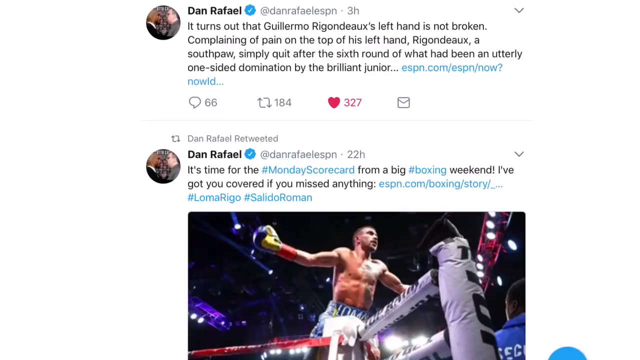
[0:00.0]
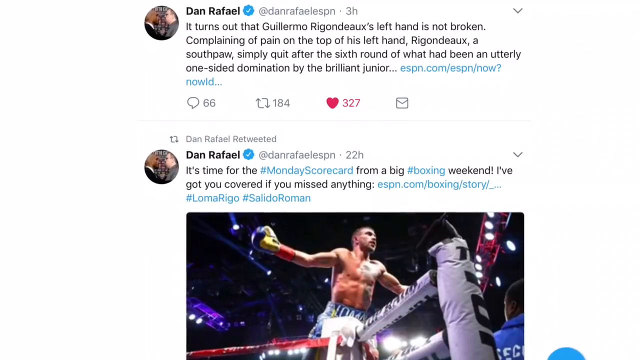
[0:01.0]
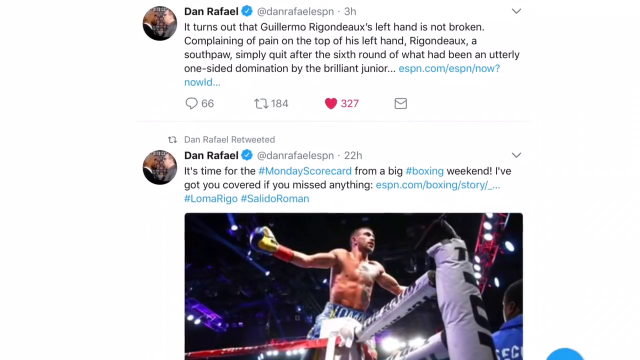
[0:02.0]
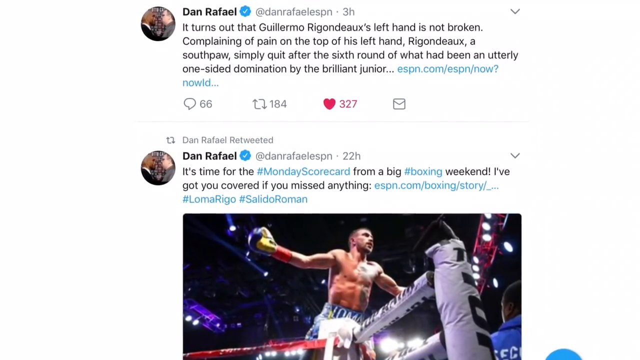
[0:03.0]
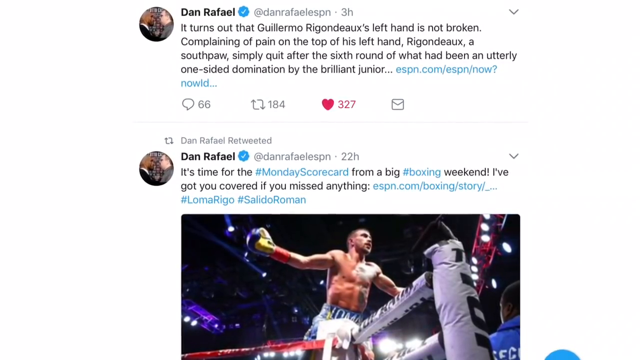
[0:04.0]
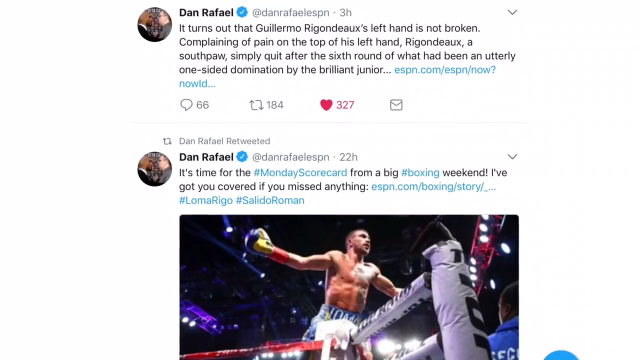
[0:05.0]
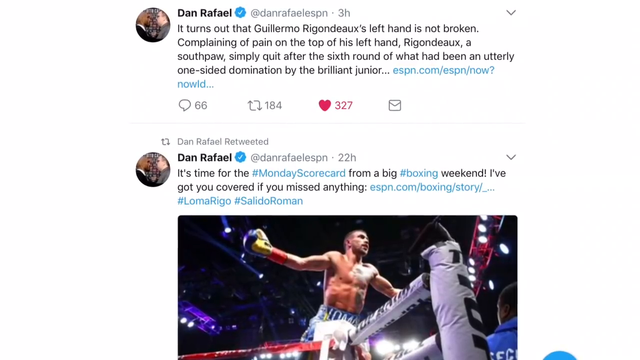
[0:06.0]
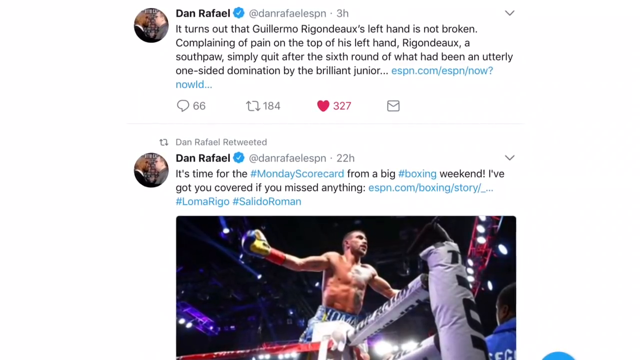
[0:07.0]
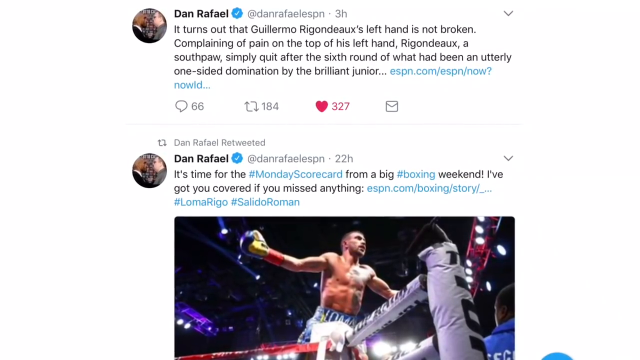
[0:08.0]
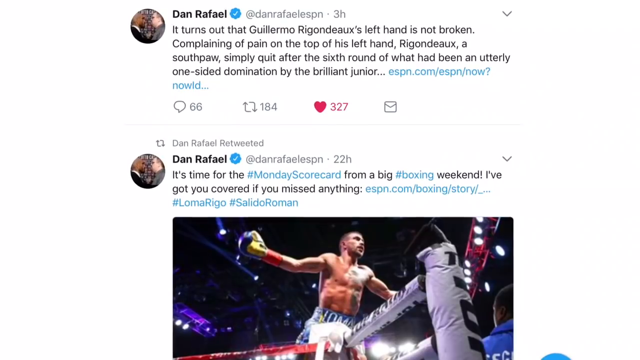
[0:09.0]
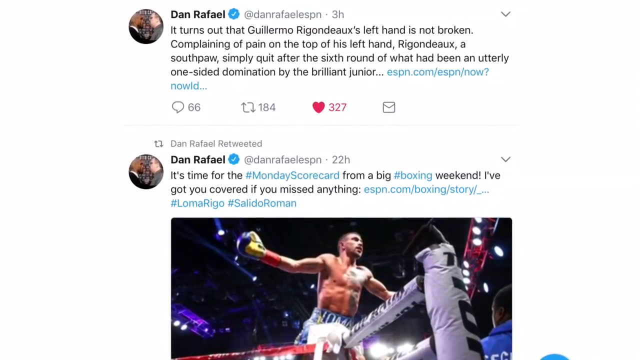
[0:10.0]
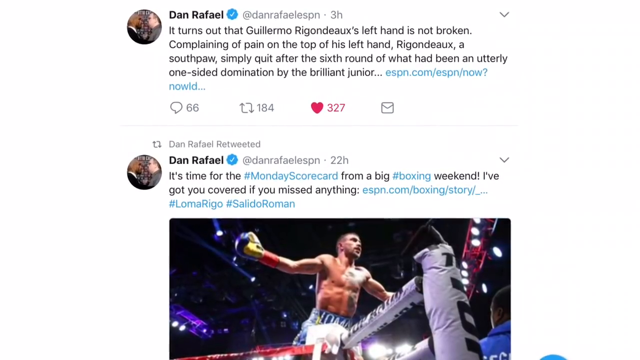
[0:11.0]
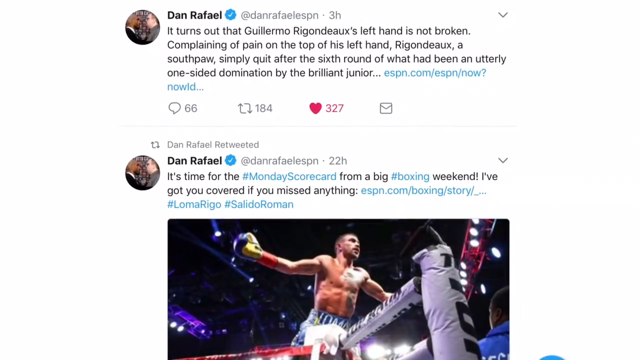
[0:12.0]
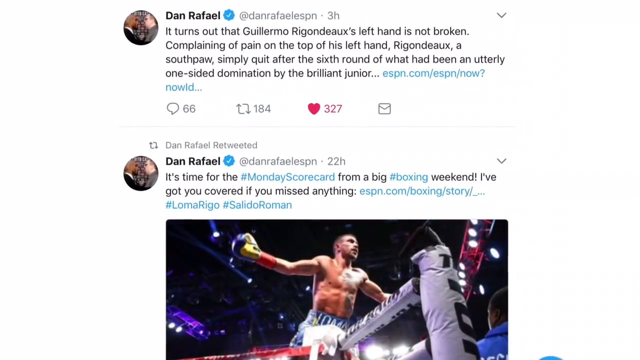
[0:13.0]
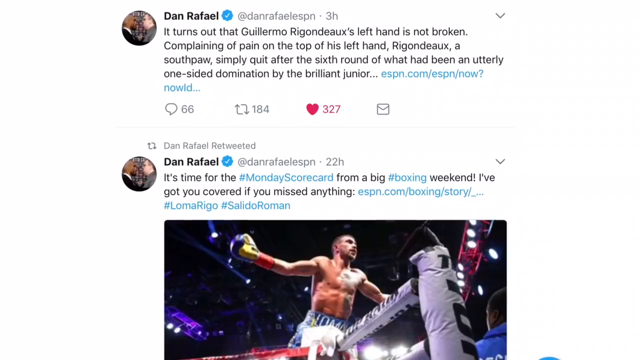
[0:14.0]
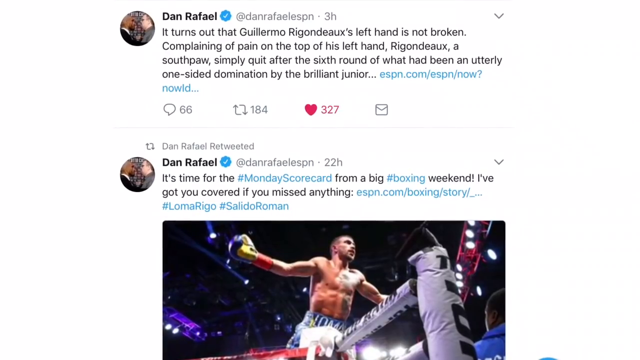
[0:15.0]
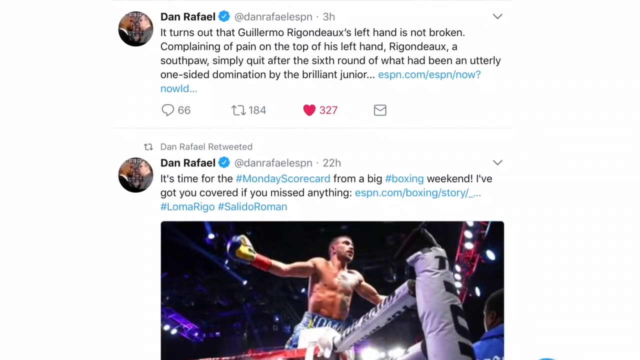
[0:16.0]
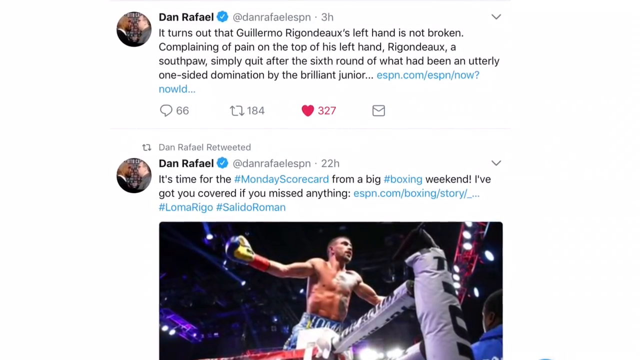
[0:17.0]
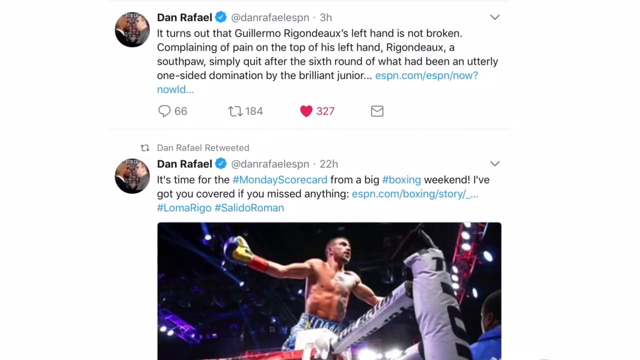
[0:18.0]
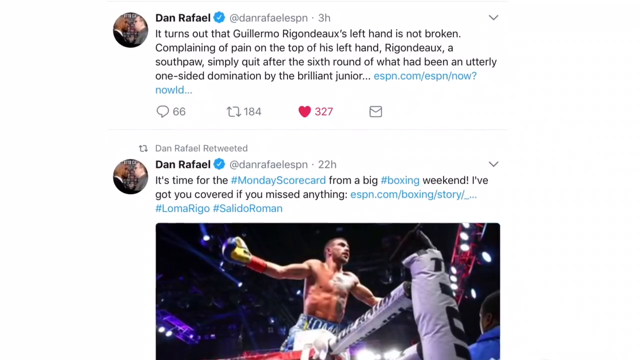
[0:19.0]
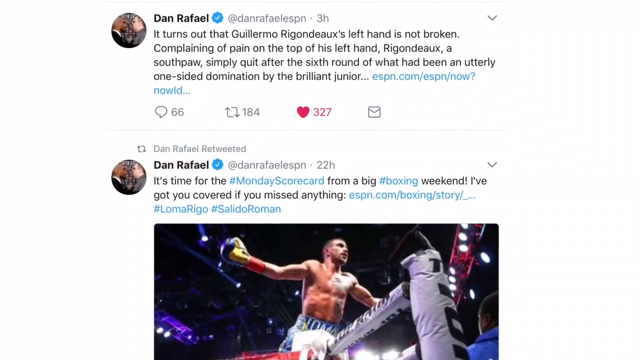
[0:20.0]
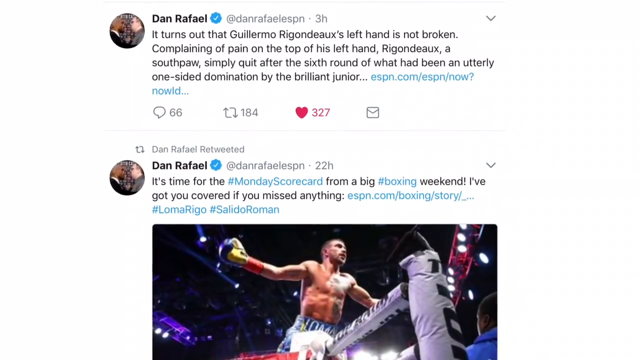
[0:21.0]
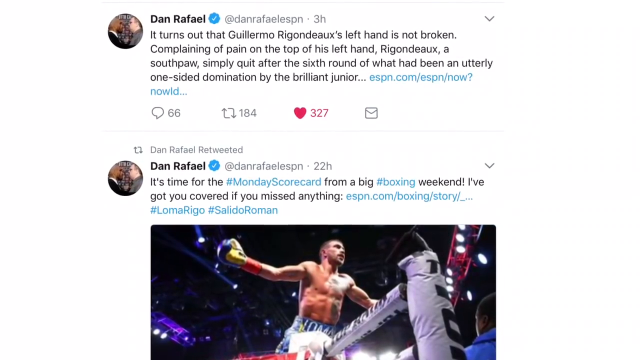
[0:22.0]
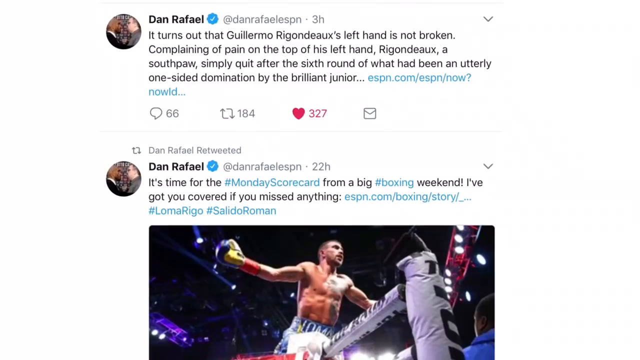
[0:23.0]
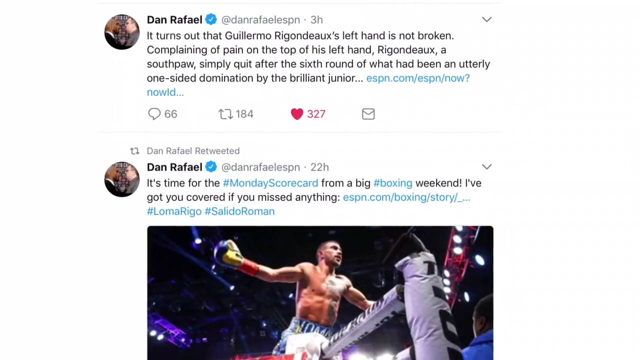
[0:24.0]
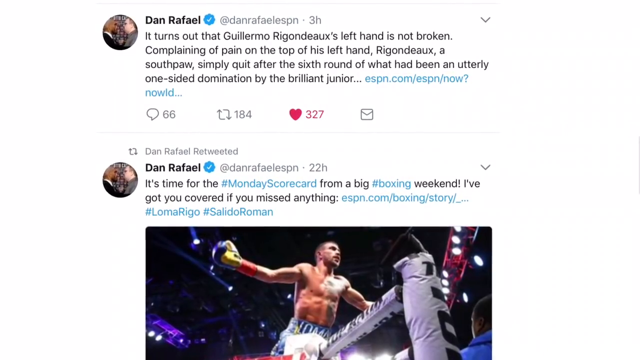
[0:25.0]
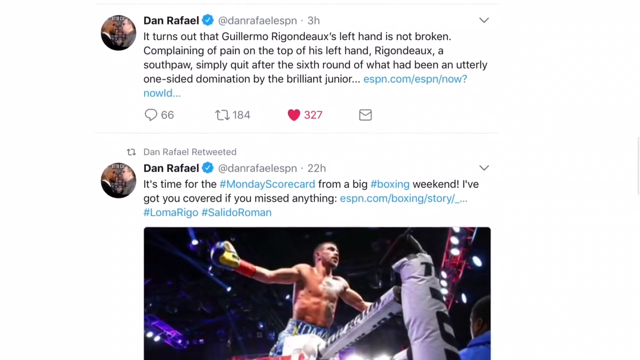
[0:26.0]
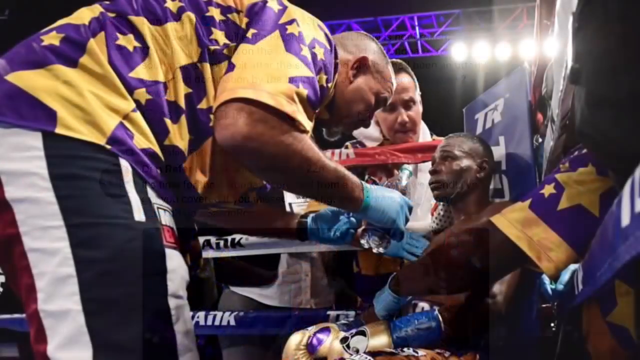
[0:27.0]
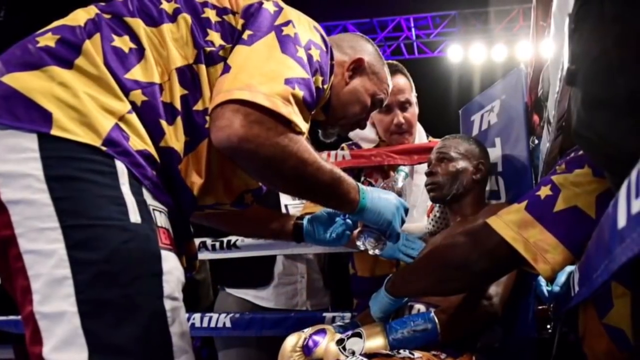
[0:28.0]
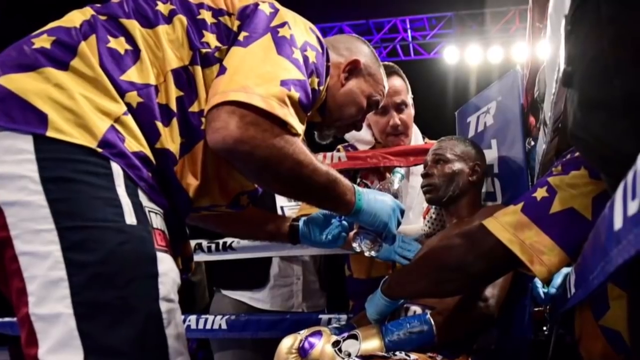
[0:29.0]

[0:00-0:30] Dan Raphael's Twitter page appears to be shown, with a blue verification tick next to the user's name. One tweet reads "it turns out that Guillermo Rigondoux's left hand is not broken," going on to say that Rigondoux simply quit after the sixth round of what had been utterly one-sided domination by "the brilliant junior." A retweeted post says "it's time for the Monday scorecard from a big boxing weekend I've got you covered if you missed anything." Beneath it is an image of a boxer mid-fight with arms outstretched, wearing a blue and yellow glove and standing, sort of, in the ring. The ring is a white-like material, and since the view looks up from below, the dark ceiling is visible, with floodlights lighting the room and a red metal beam across the top right. The image ends with a boxer sitting down in the corner of his ring.